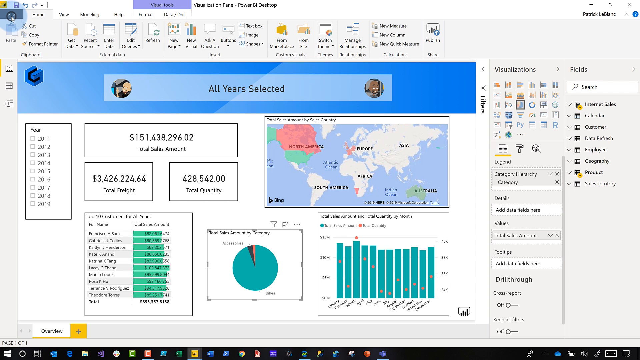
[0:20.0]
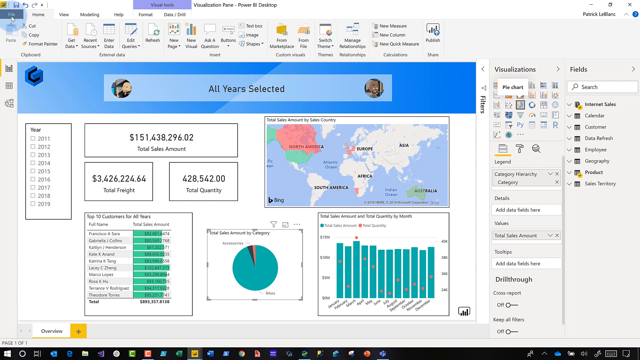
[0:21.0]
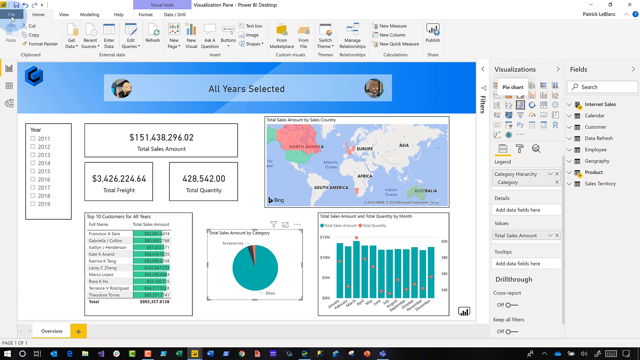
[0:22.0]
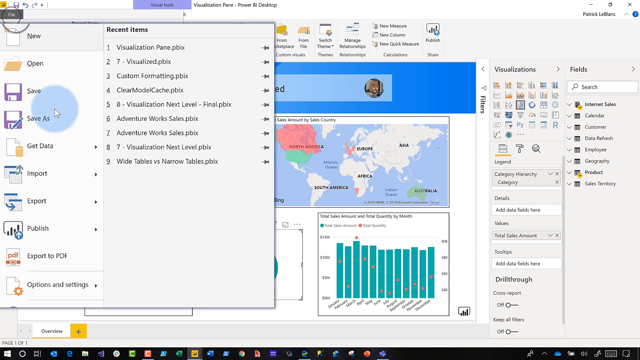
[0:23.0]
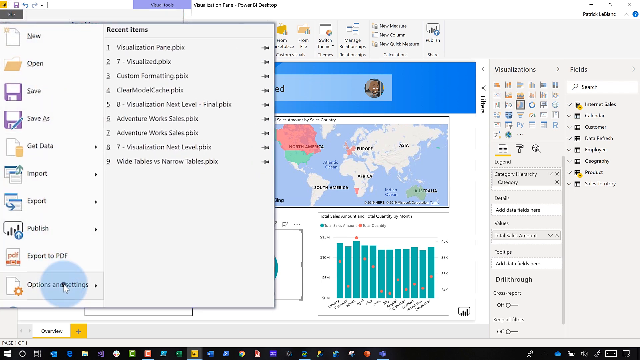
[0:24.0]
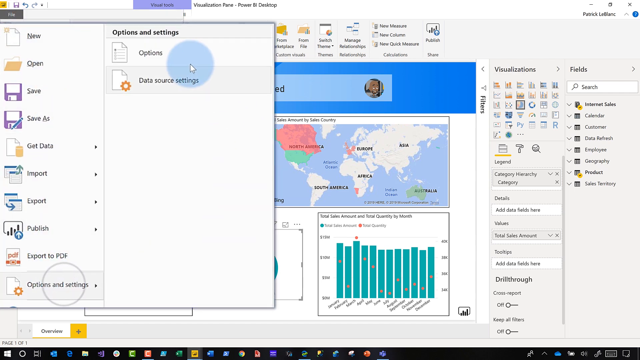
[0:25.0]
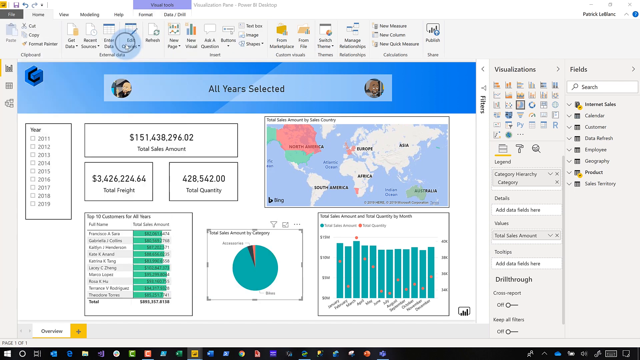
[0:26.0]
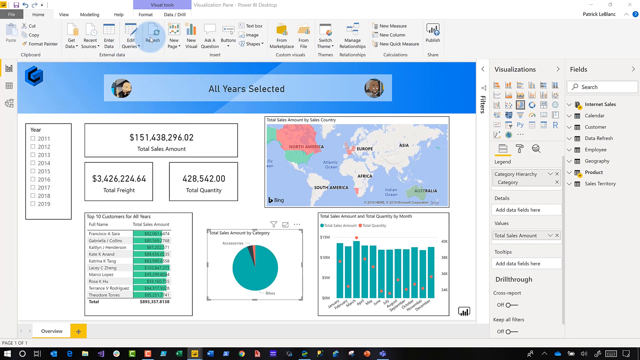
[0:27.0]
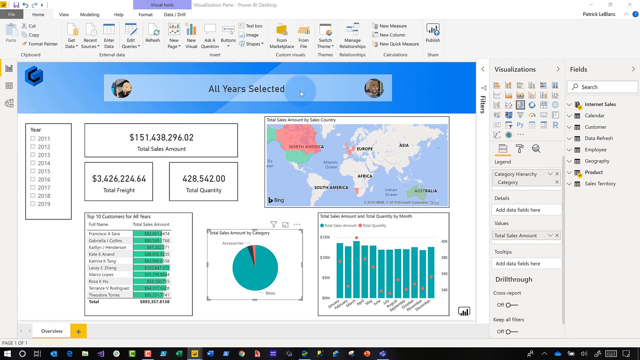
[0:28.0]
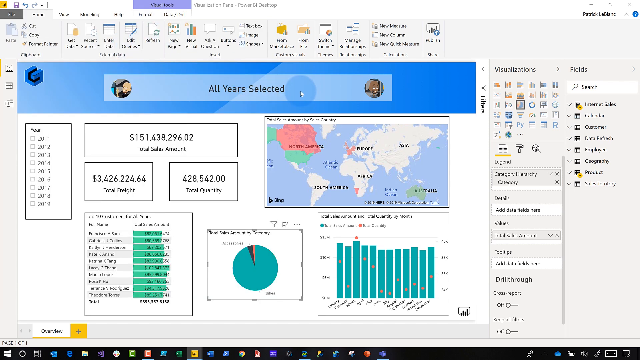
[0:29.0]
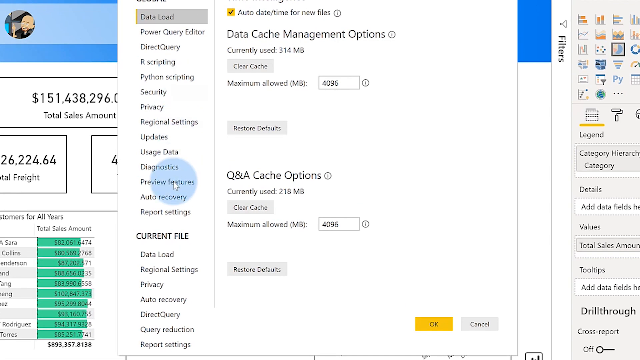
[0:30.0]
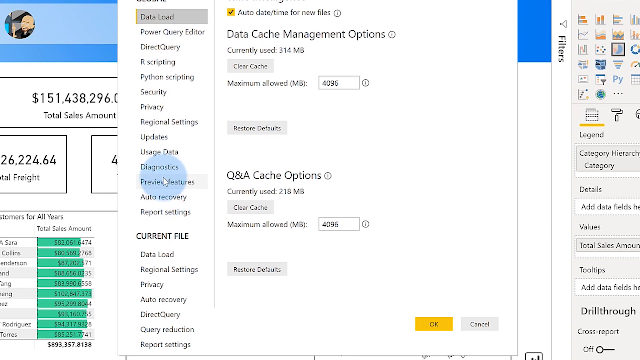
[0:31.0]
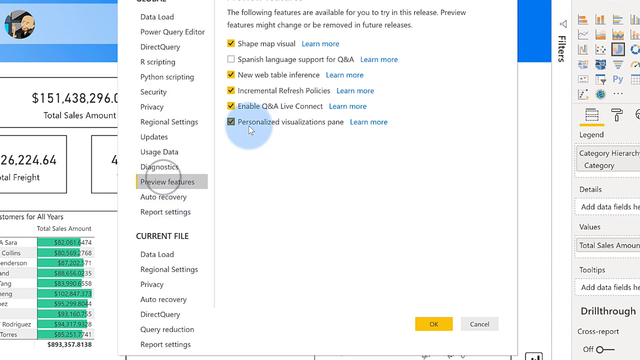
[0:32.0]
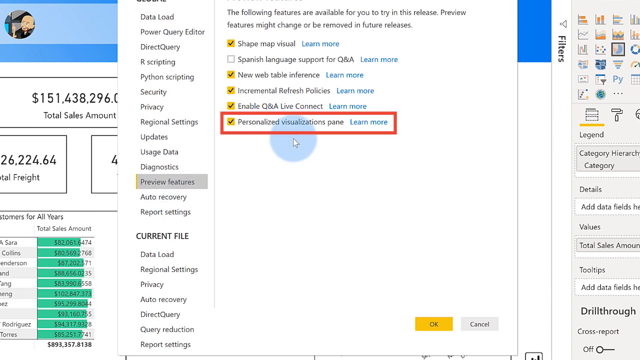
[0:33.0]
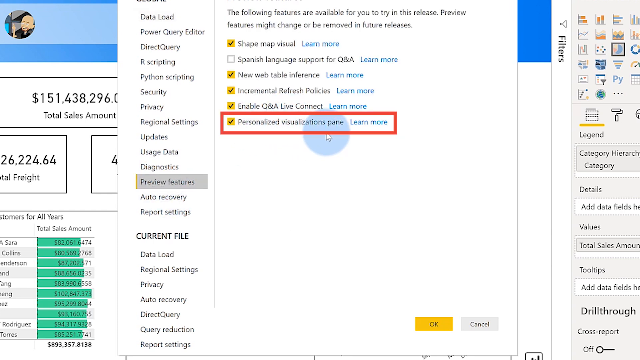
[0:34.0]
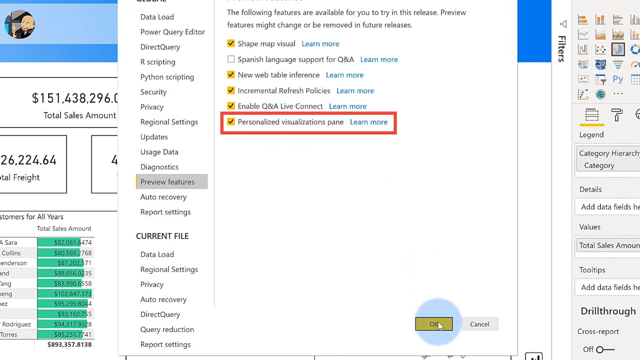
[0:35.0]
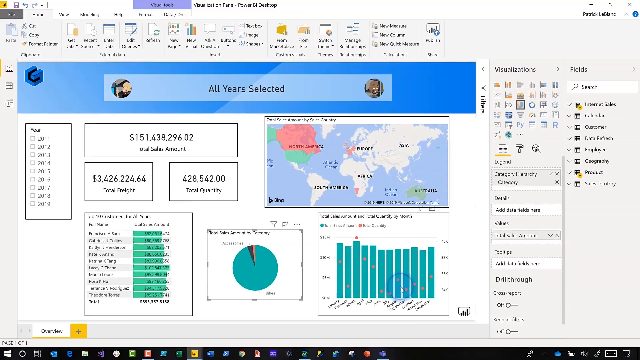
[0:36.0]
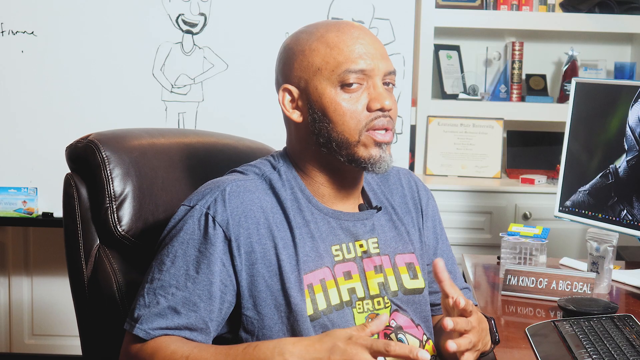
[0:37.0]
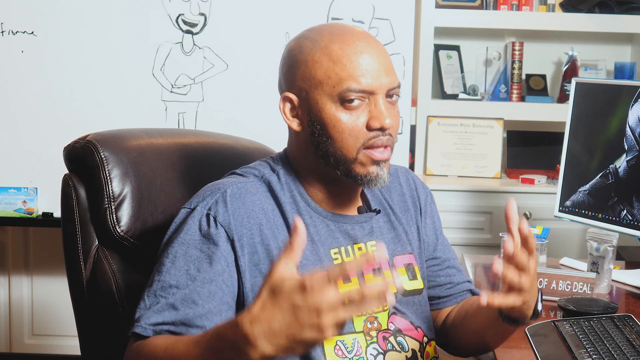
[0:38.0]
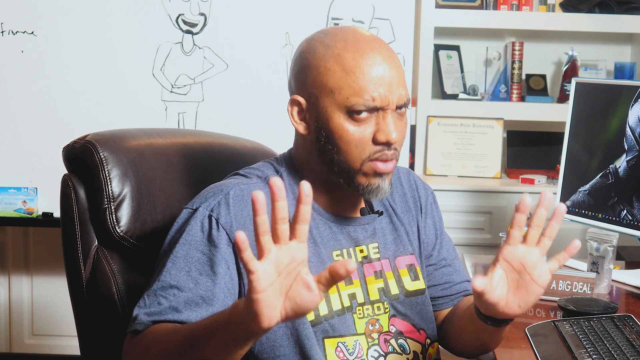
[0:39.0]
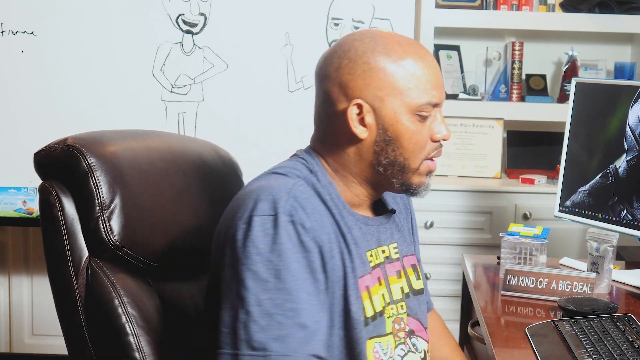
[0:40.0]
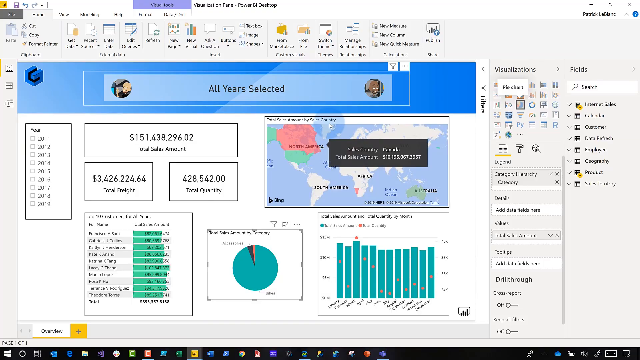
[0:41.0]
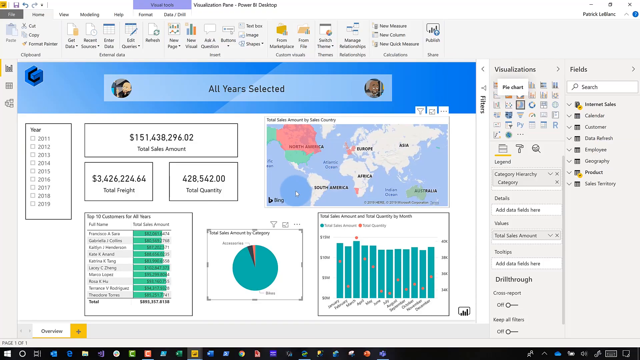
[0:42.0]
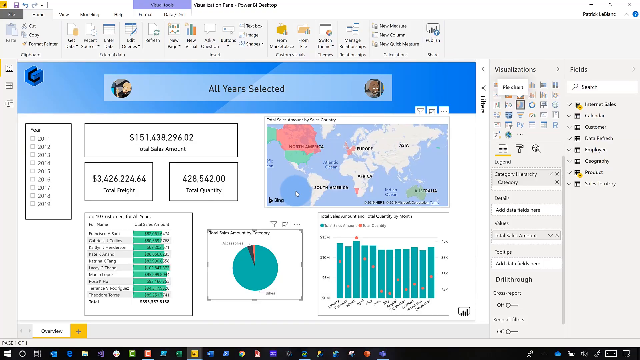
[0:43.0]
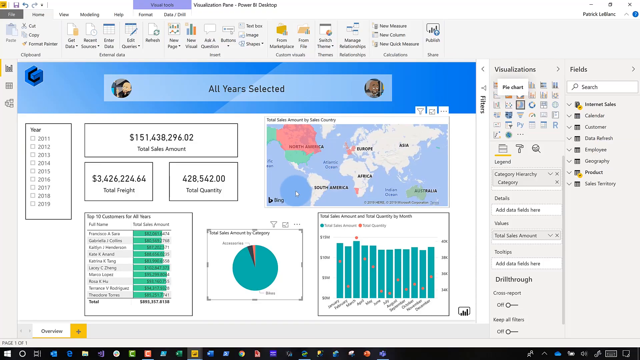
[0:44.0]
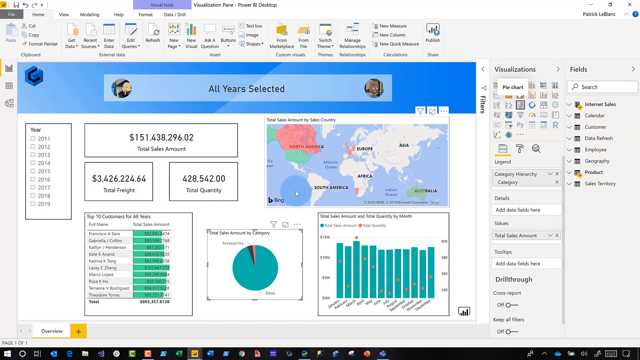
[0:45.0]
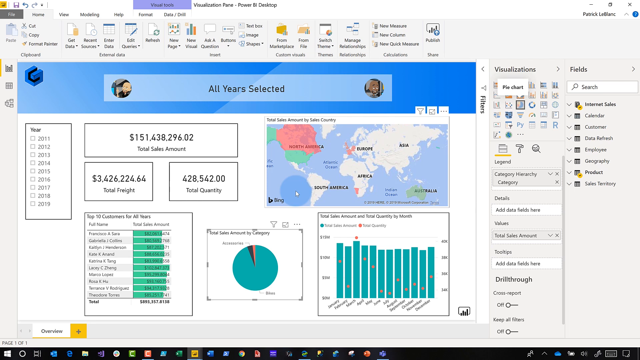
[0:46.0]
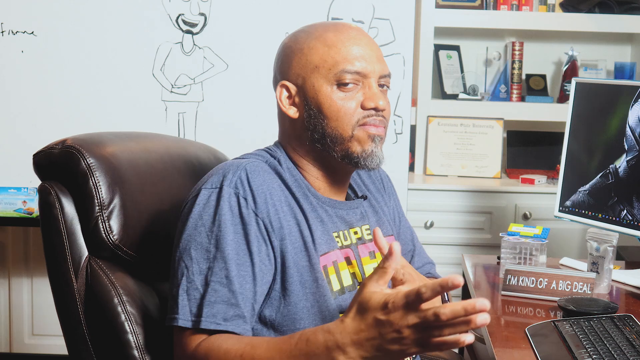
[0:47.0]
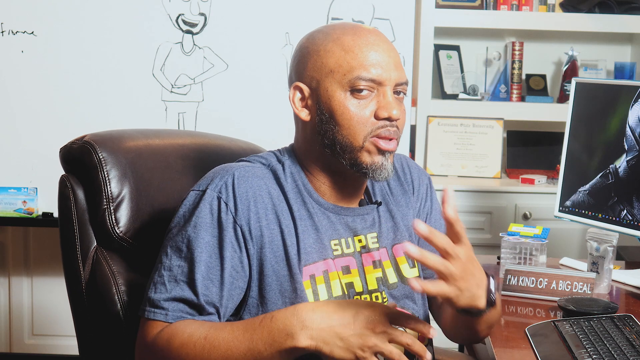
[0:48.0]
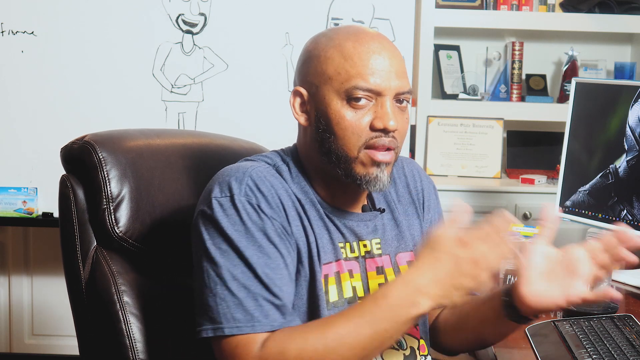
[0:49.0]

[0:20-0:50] The man opens a tab labeled "file," and many options appear on the left. He goes to the bottom option, "options and settings," clicks it, and then clicks "options." His cursor has a blue holographic circle attached that follows it wherever it goes. A white window pops up in the middle of the screen. He moves over to the left-hand side, where the circle highlights two options, "diagnostics" and "preview features," and he clicks "preview features." Six options with yellow checkboxes appear, and every box is checked except "Spanish language support for Q&A." He clicks the OK button. The camera goes back to him as he talks and makes hand motions. He turns back to his computer, on the right side of the screen, and hovers over a map showing all seven continents.